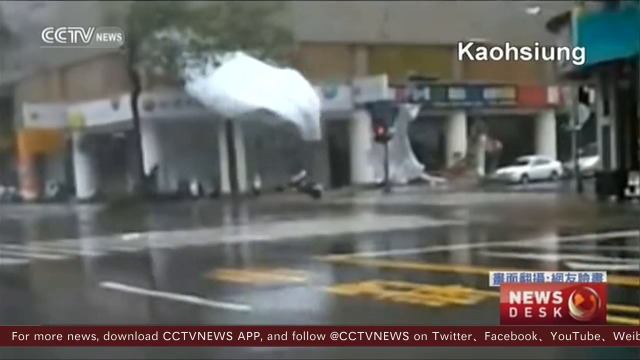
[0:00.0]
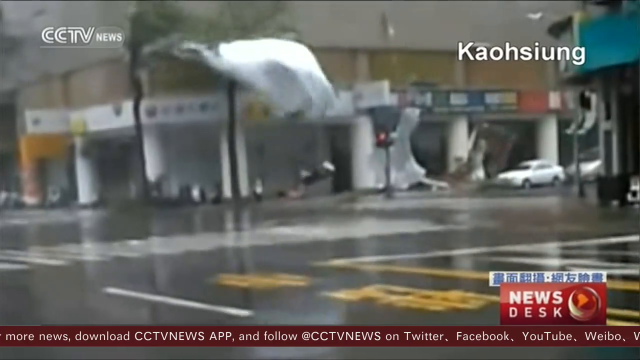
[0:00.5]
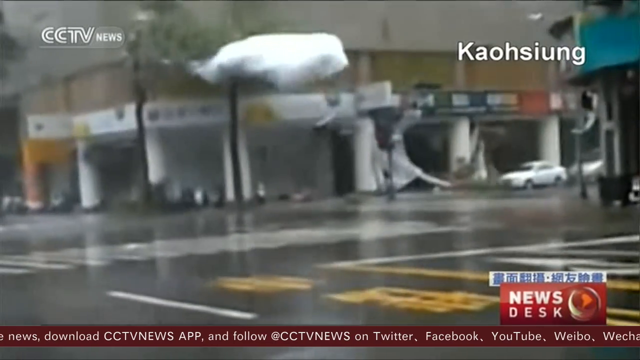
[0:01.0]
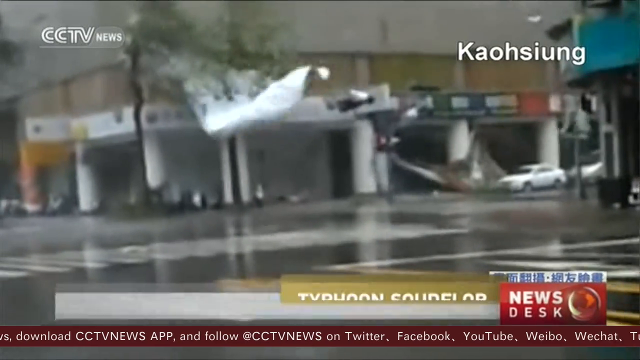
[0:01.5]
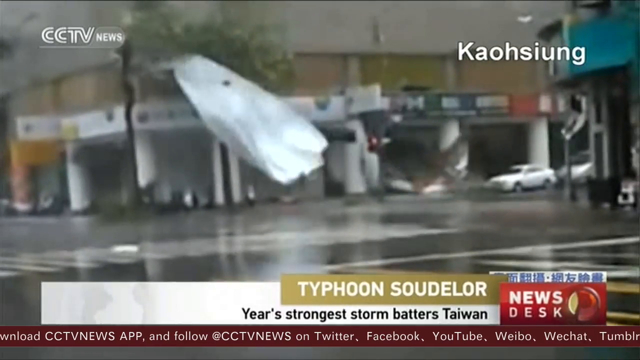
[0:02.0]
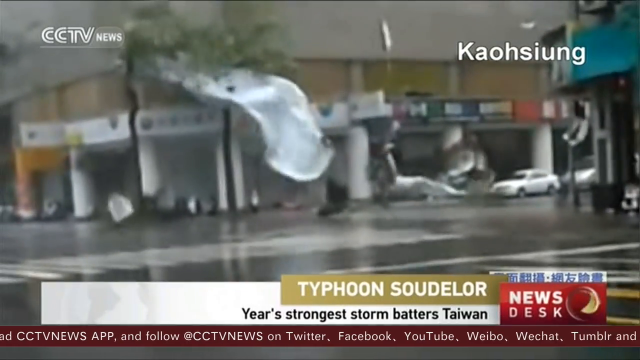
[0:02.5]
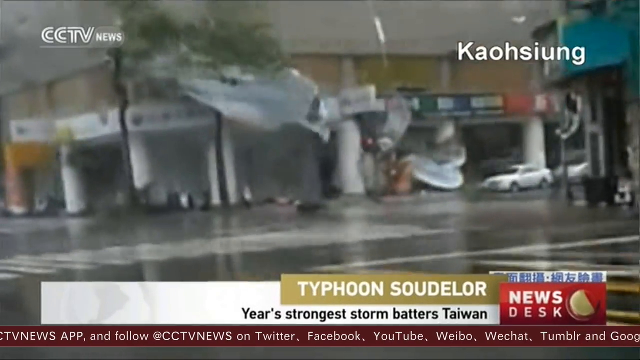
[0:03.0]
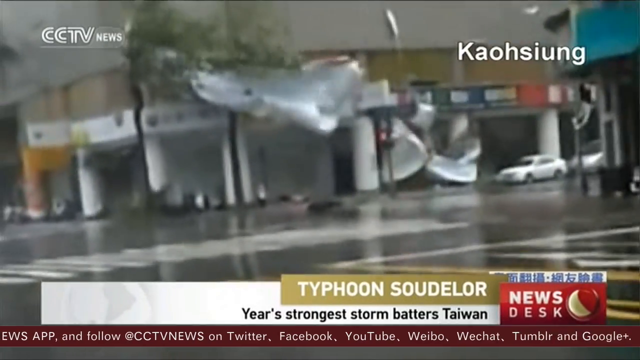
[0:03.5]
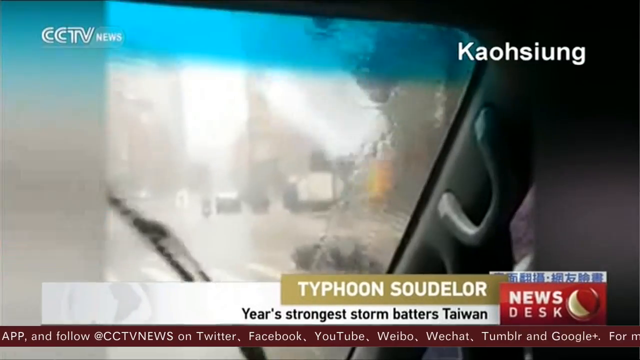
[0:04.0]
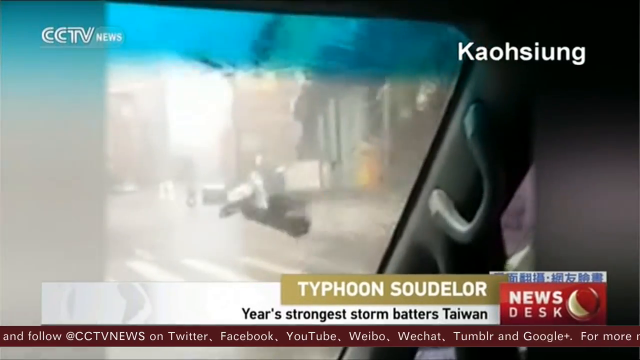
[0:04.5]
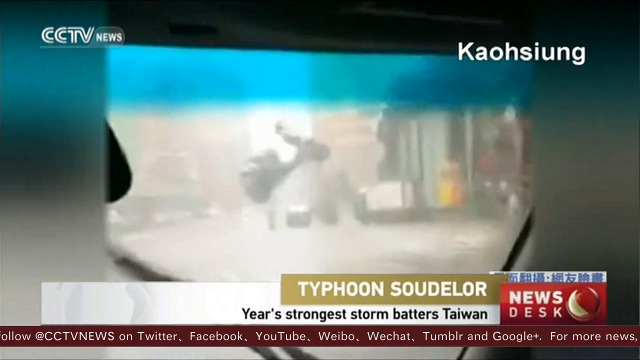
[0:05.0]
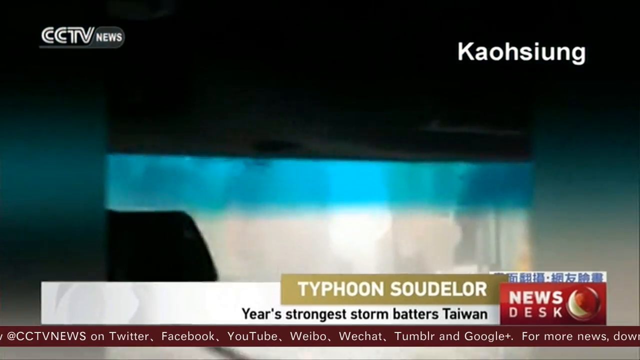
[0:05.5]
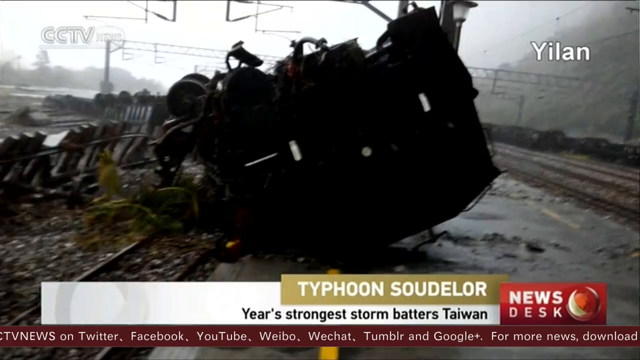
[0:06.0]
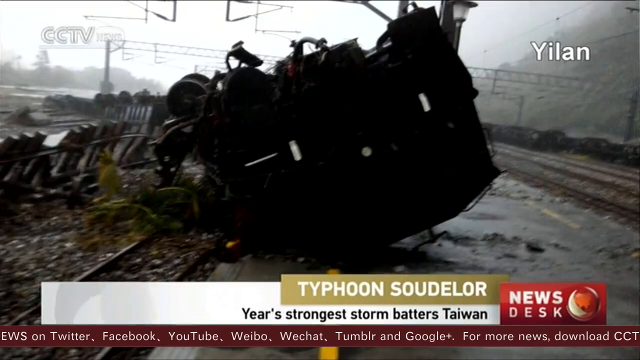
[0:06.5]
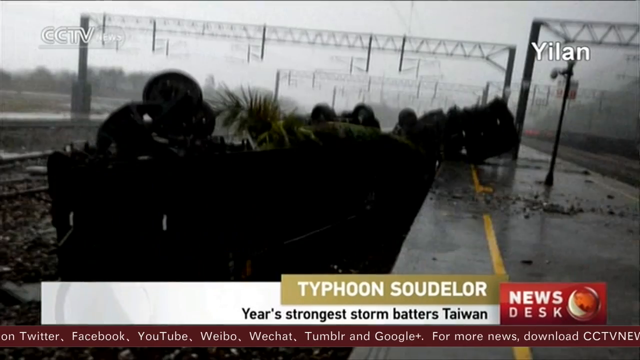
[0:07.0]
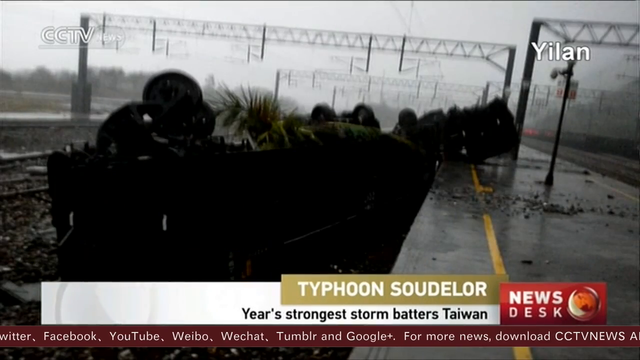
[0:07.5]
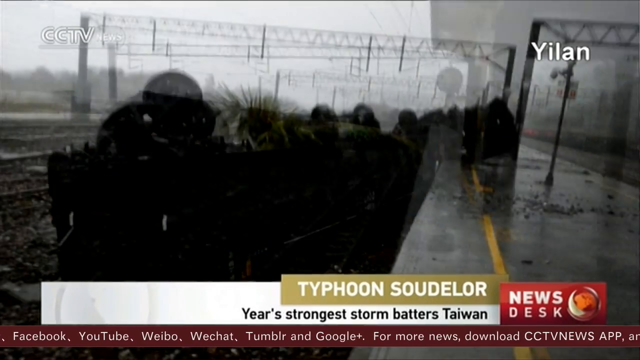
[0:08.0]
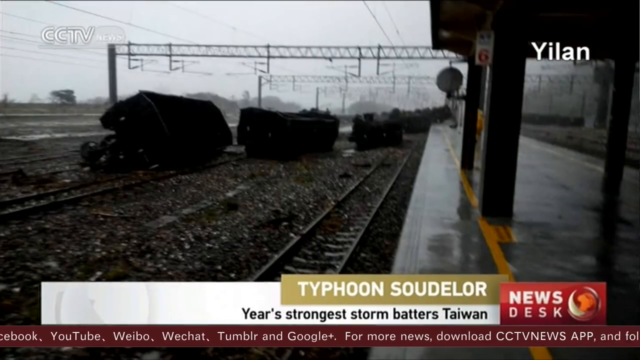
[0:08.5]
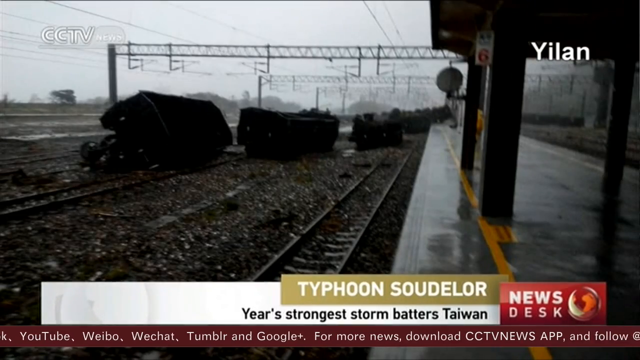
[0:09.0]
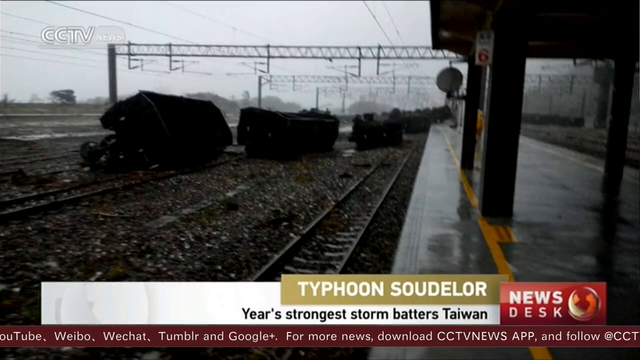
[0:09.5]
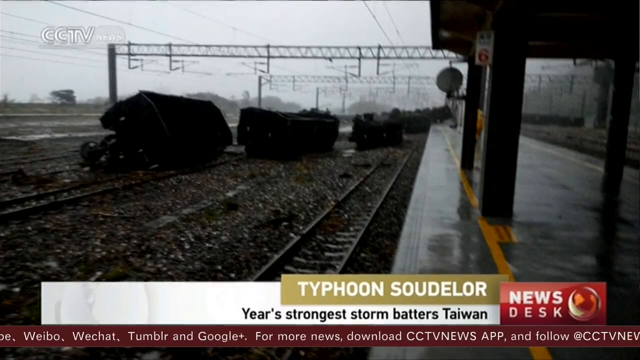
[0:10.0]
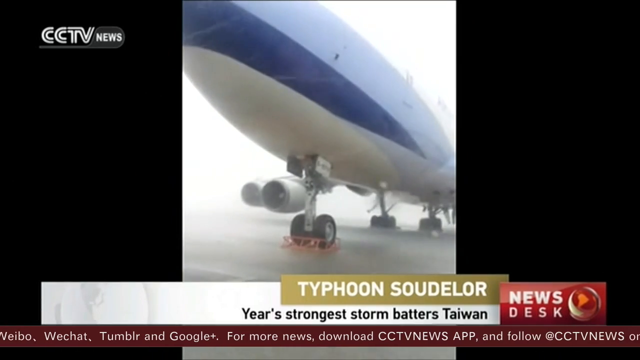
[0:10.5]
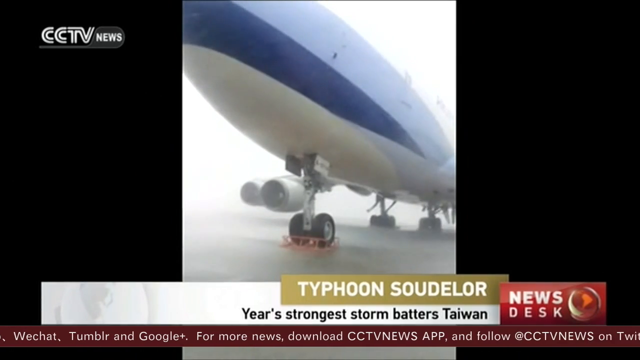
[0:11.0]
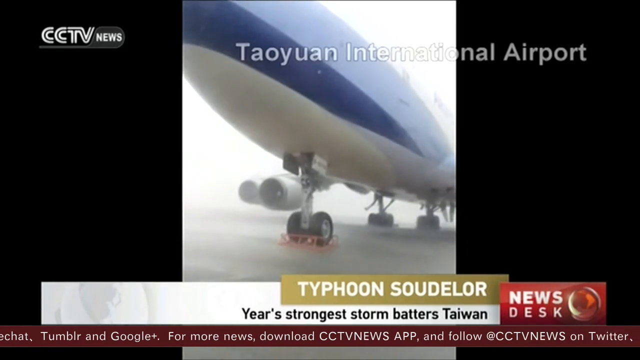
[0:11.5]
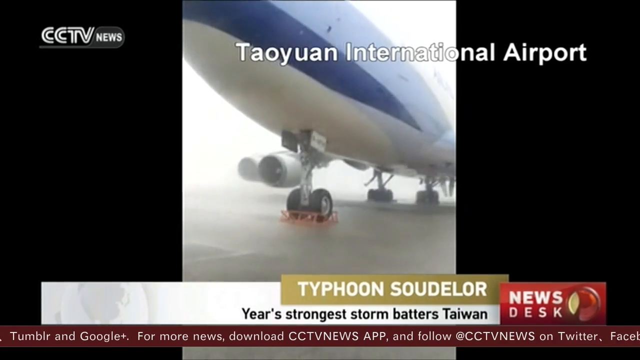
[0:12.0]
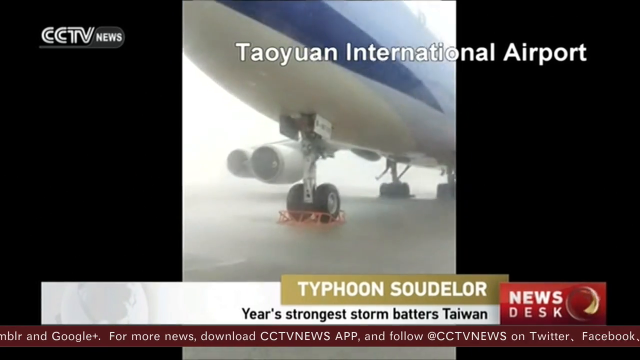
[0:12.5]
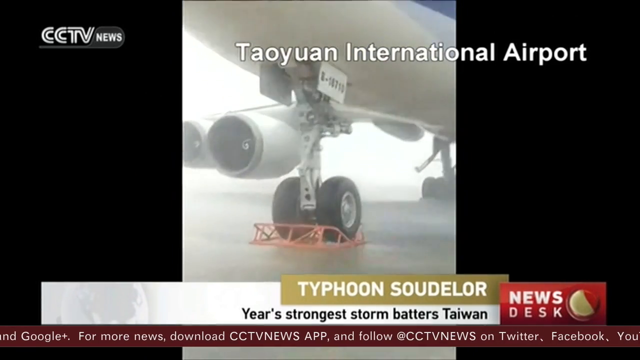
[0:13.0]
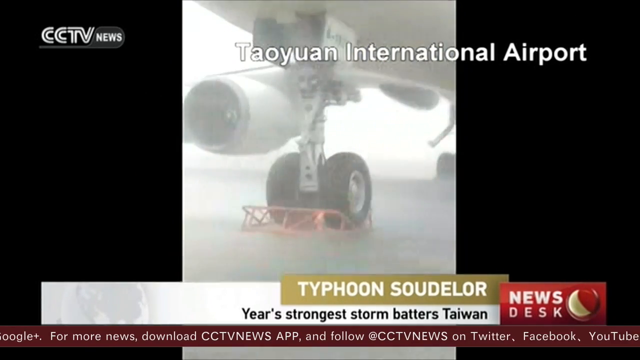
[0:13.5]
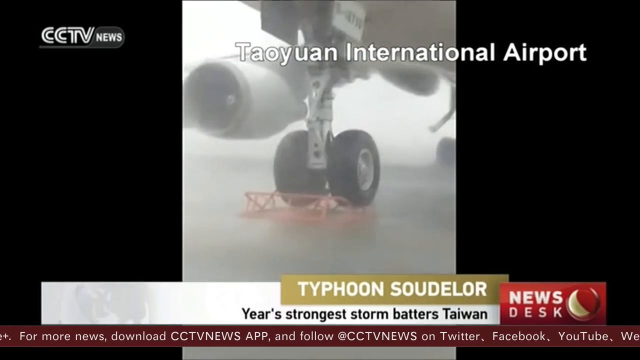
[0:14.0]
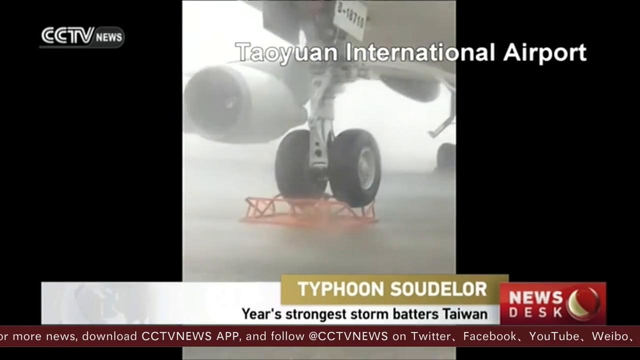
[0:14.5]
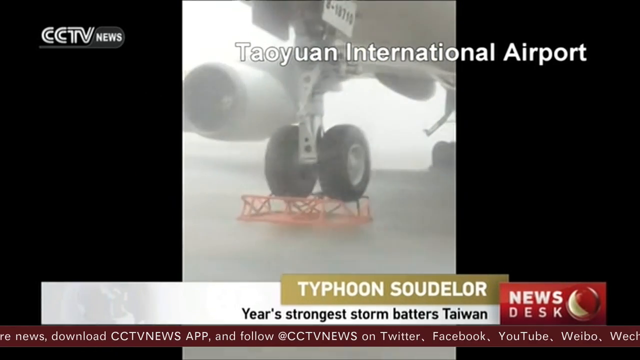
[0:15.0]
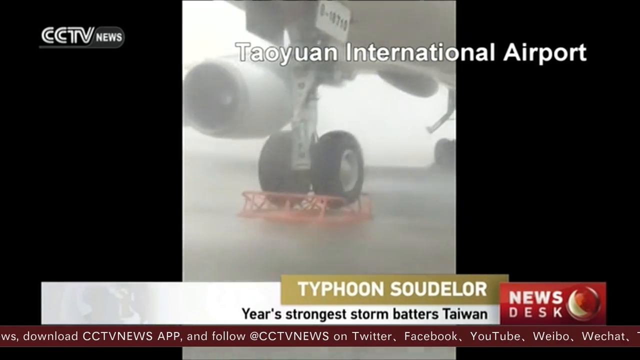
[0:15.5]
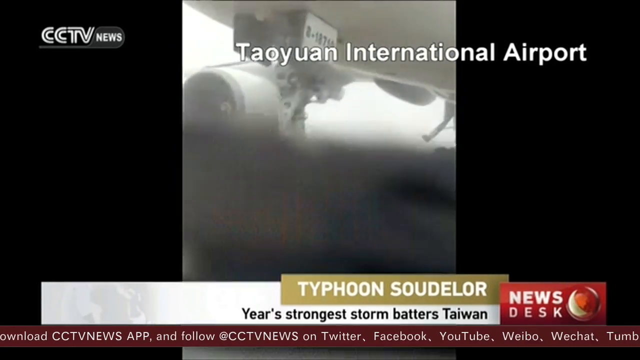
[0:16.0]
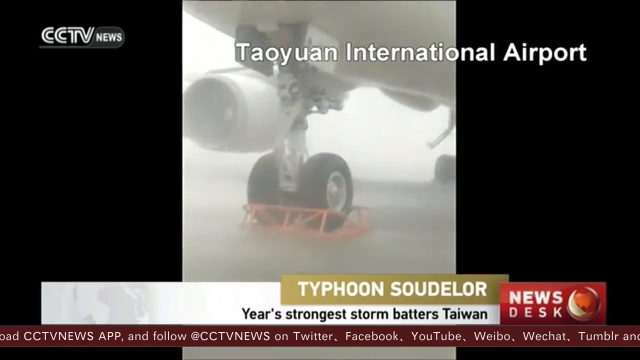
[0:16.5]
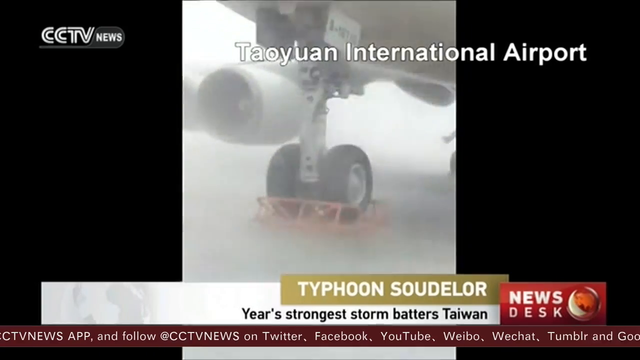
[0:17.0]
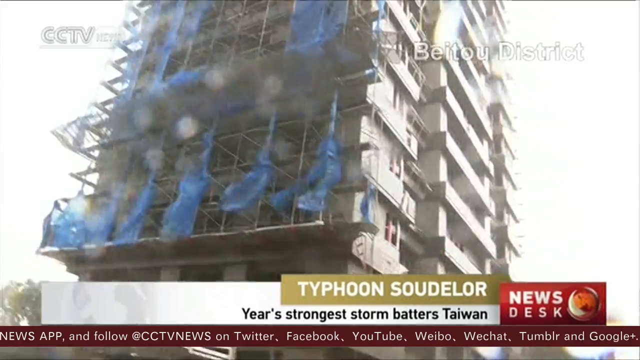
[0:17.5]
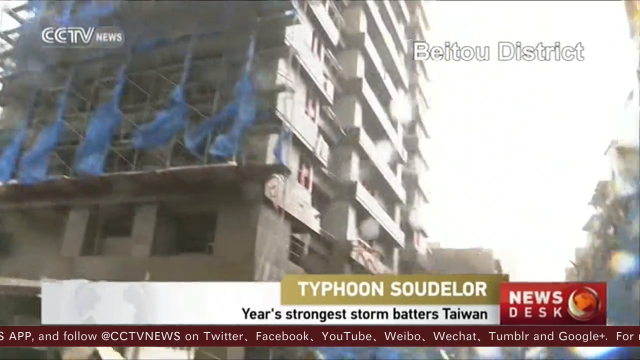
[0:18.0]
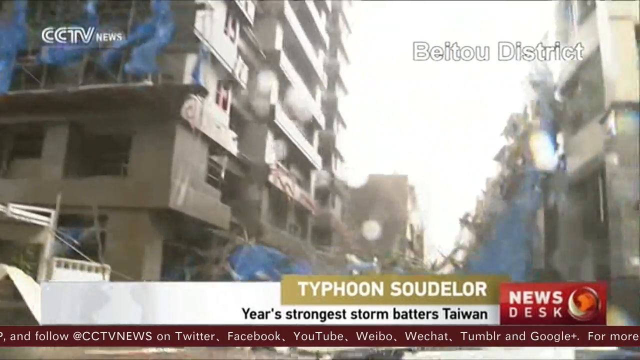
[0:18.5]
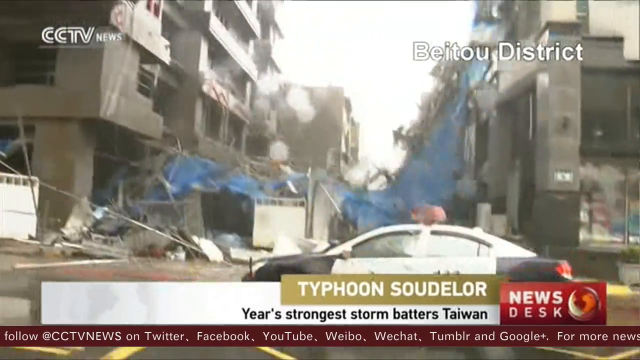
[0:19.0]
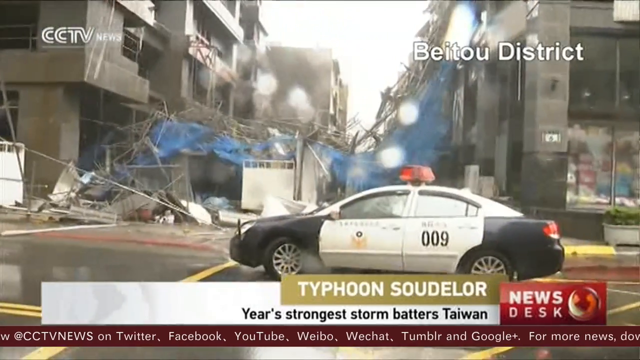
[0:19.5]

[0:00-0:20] Harsh typhoon weather hits Taiwan in CCTV news coverage. At Taiwan International Airport the weather is very bad, bringing down trees, mansions, helicopters and airplanes. Ports and other places are also hit by the bad weather, and people are working to deal with the situation.